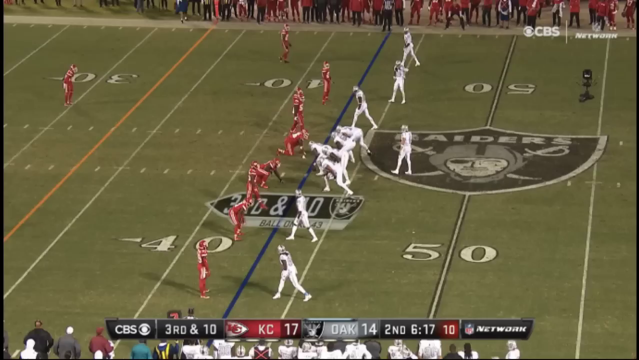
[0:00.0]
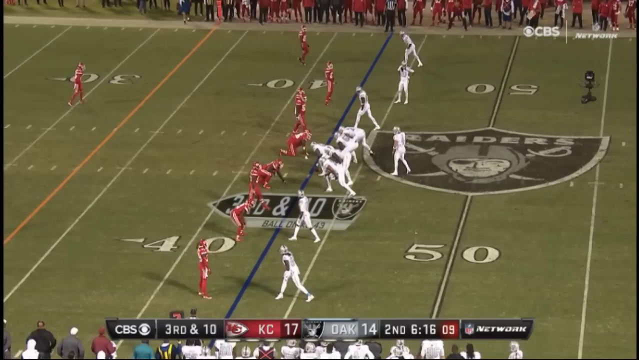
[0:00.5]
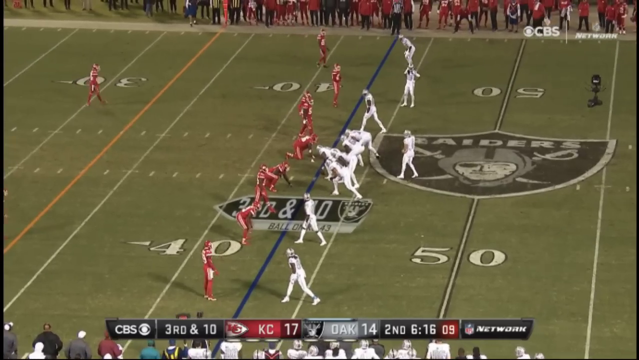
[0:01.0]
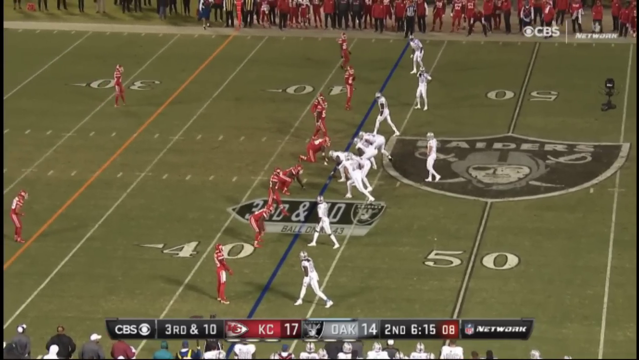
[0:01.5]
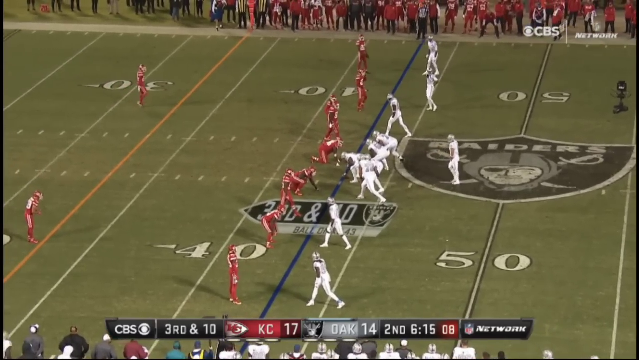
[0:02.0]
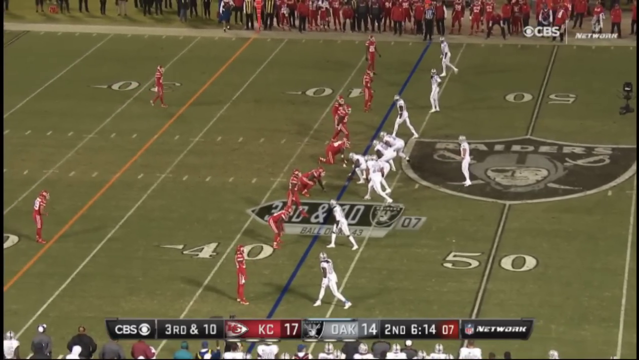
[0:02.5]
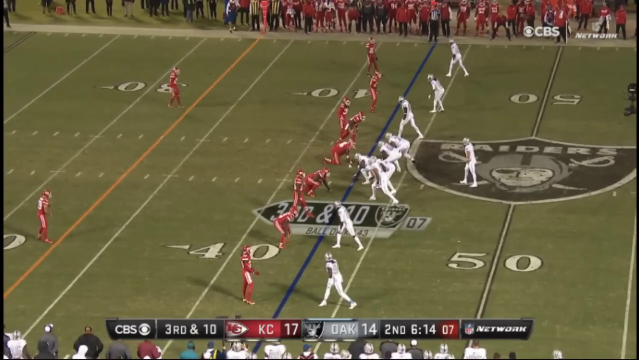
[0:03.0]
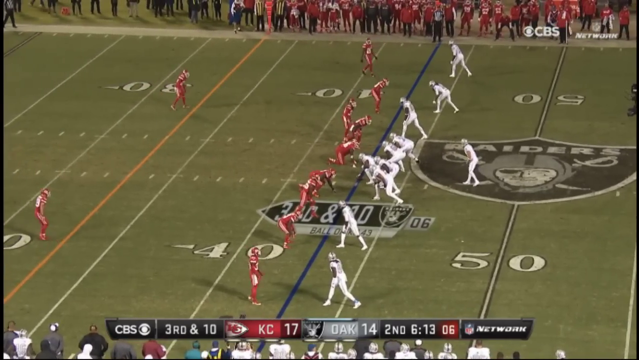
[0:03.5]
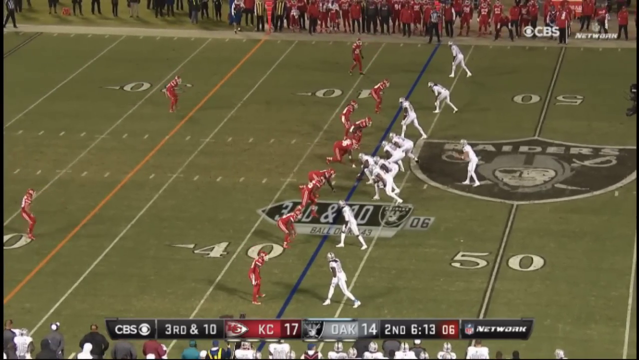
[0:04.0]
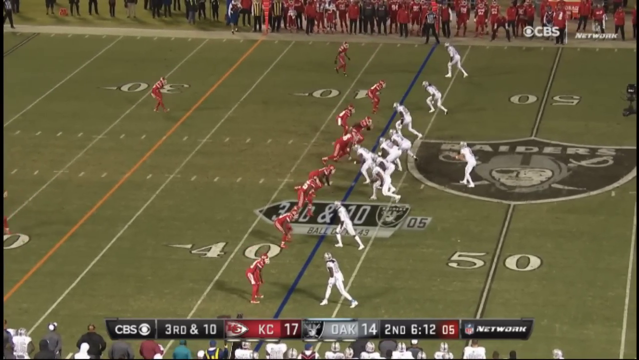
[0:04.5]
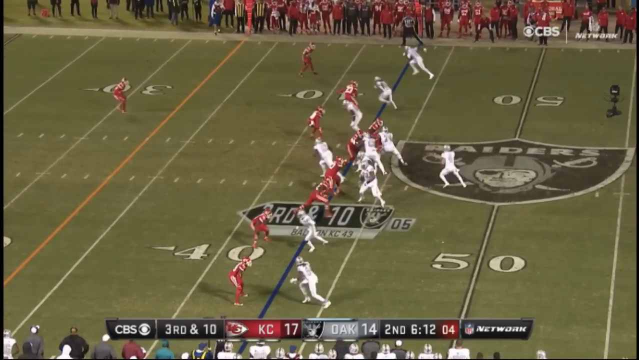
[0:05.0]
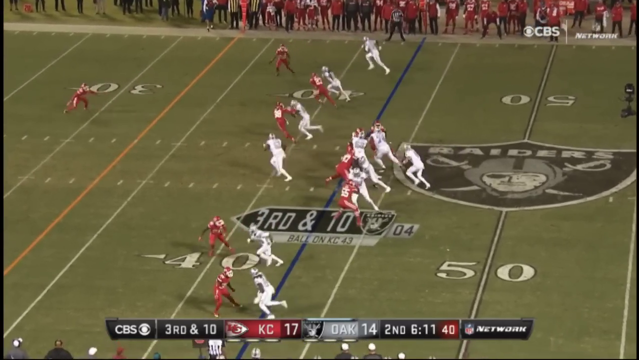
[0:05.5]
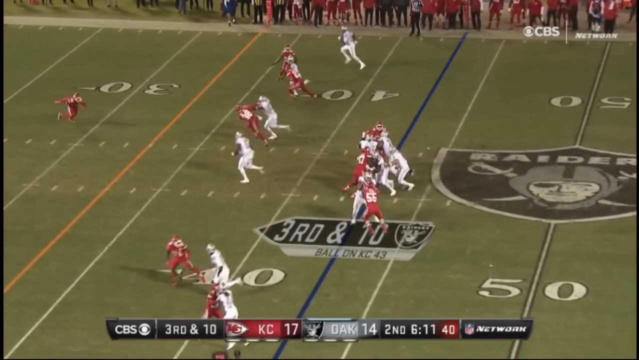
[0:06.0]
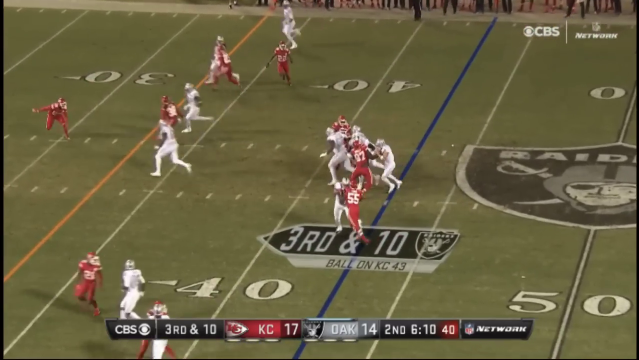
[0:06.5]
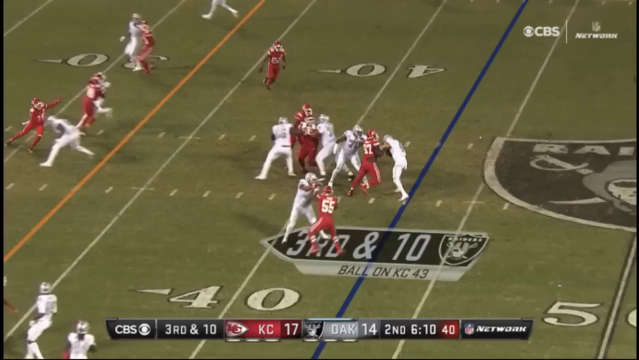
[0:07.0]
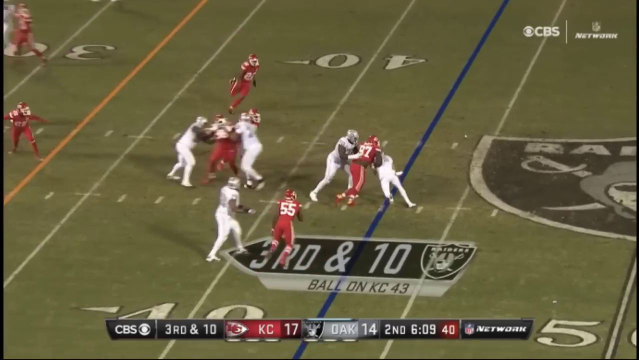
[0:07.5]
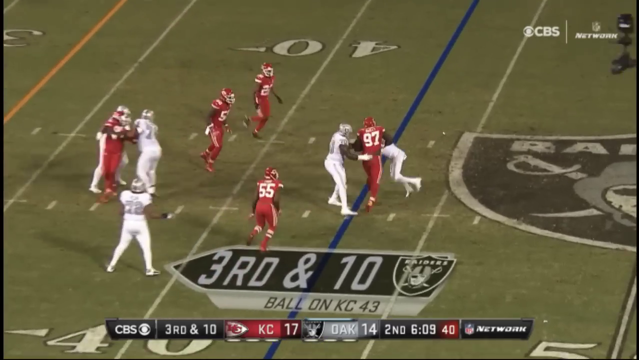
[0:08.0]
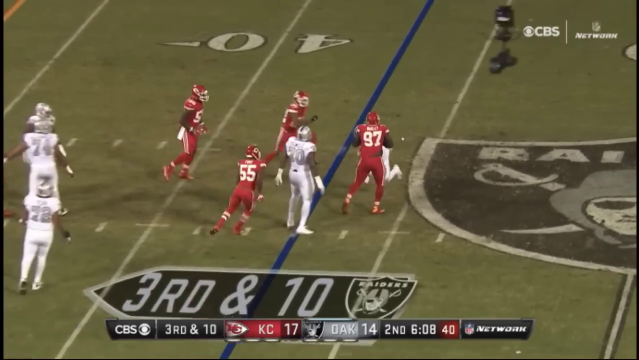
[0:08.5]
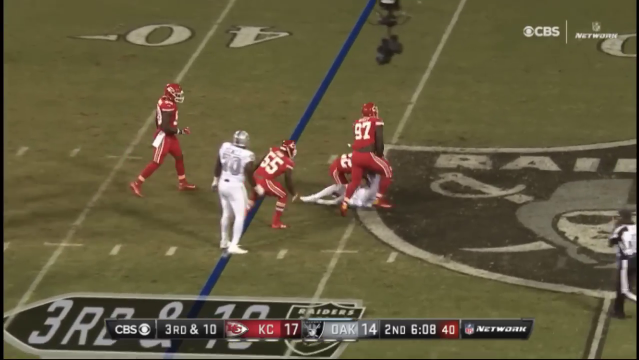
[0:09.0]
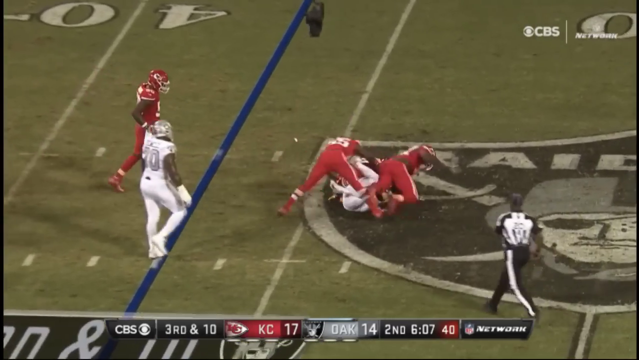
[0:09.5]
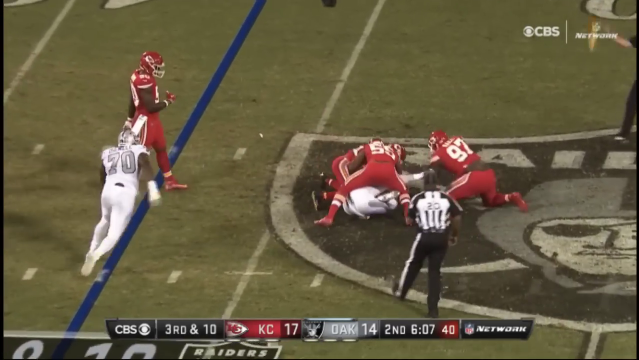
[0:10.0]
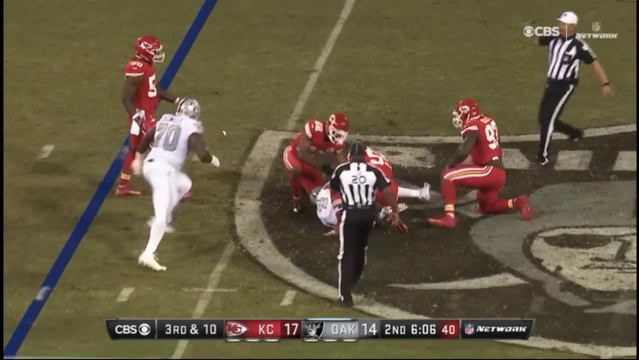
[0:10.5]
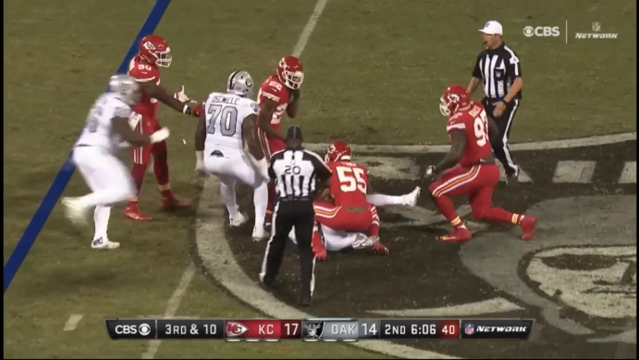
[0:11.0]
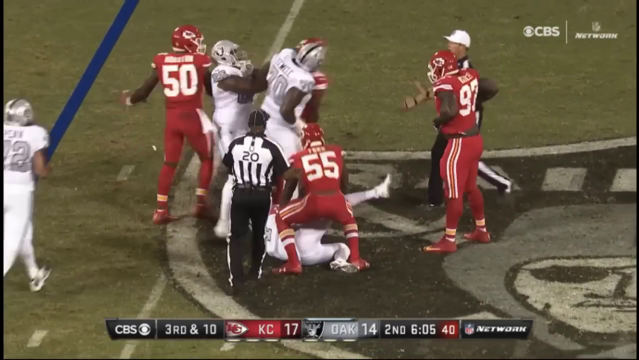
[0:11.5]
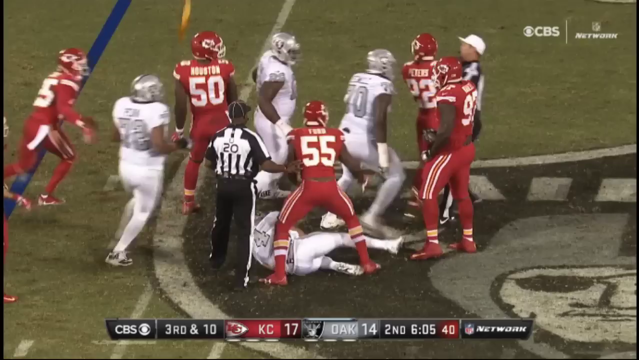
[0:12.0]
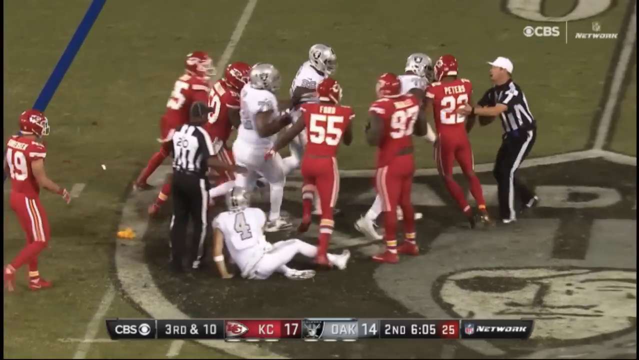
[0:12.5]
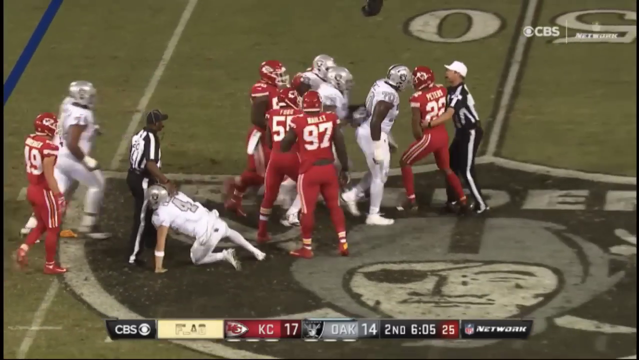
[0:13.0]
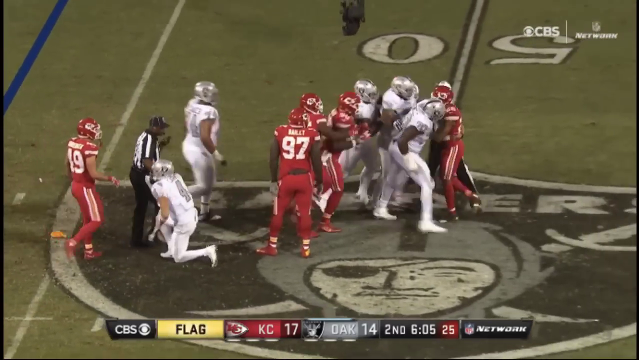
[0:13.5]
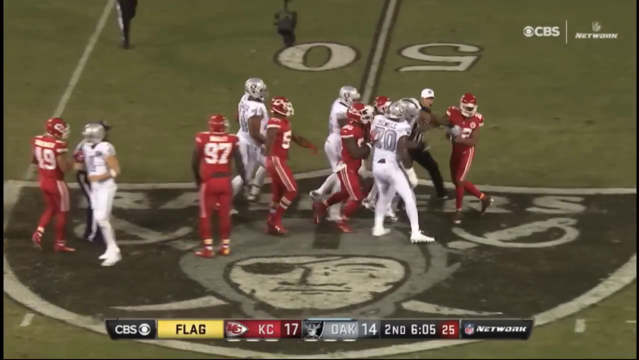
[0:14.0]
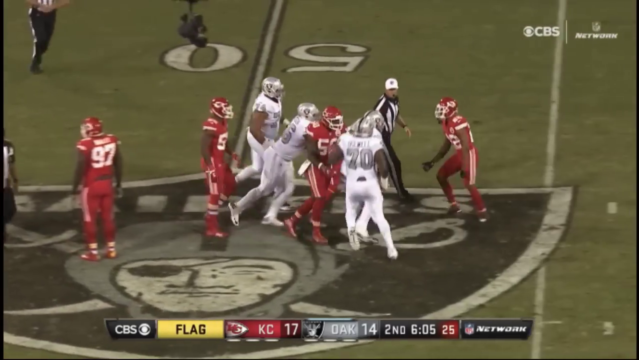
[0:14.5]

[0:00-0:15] The video is titled Marshawn Lynch Gets Ejected for Grabbing a Referee, Chiefs vs. Raiders NFL. It opens with a high view of an NFL football game between the Kansas City Chiefs and the Oakland Raiders. The scoreboard shows the score at 17-14 with the Chiefs in the lead, and it is second down. The referees try to keep a player from grabbing another player by the jersey. The video zooms in on some Chiefs players speaking very closely to one of the referees as number 24 of the Raiders runs off the field. Four or five referees are on the field talking and trying to figure out the play. A yellow flag has been thrown, and the video switches to a split screen showing multiple altercations between Chiefs and Raiders players. The replay also shows the altercation between the referee and Marshawn Lynch.